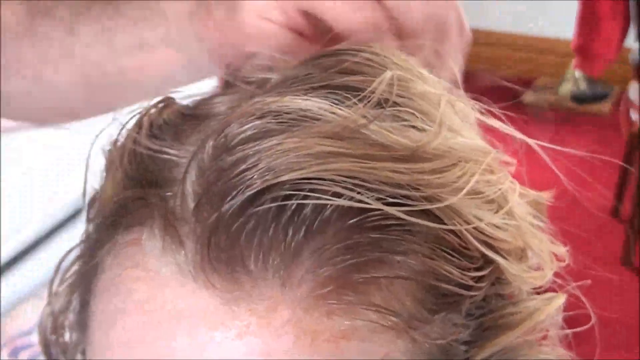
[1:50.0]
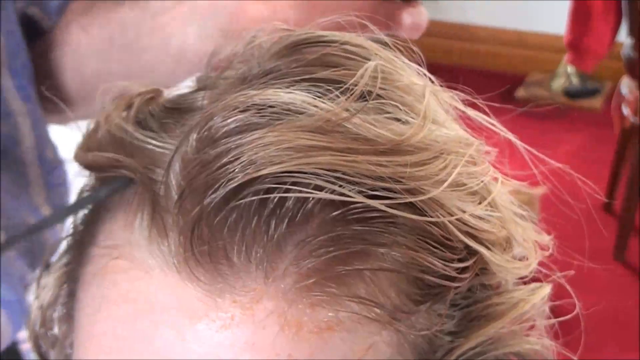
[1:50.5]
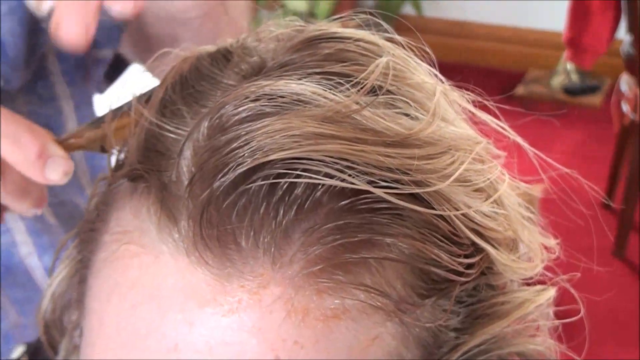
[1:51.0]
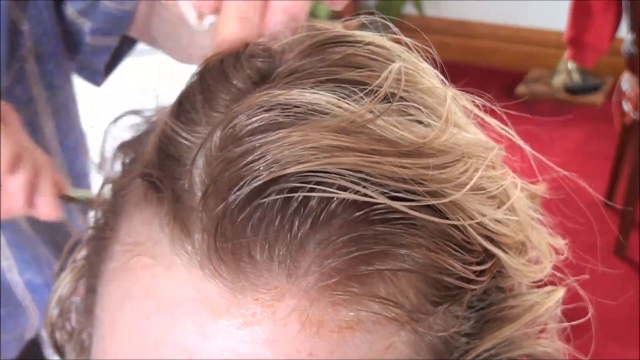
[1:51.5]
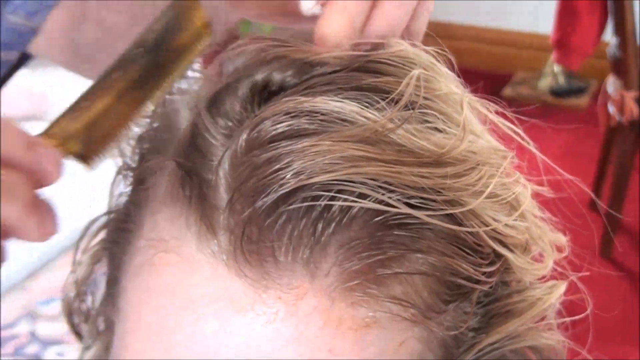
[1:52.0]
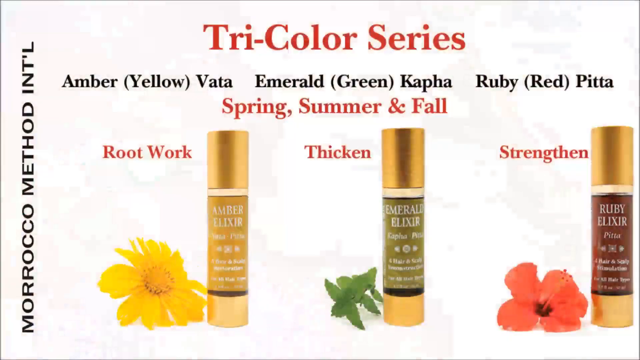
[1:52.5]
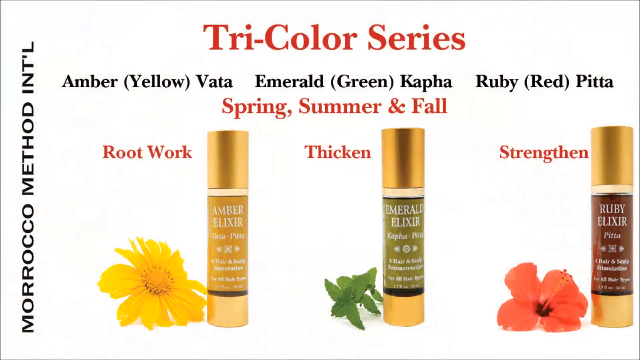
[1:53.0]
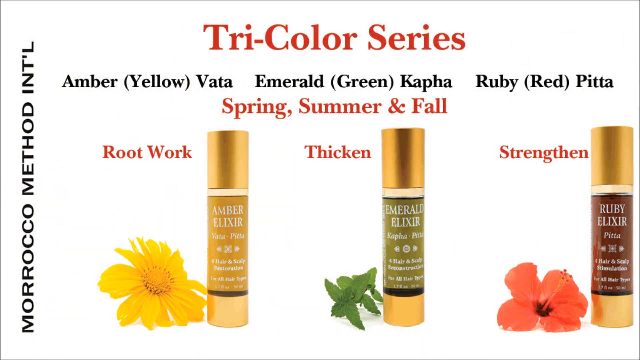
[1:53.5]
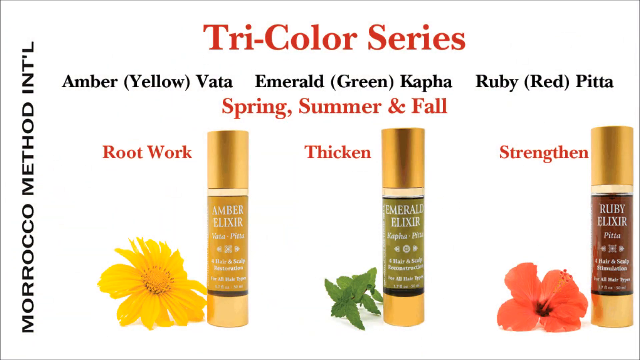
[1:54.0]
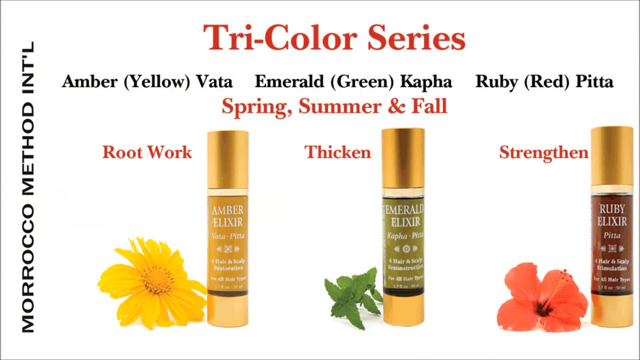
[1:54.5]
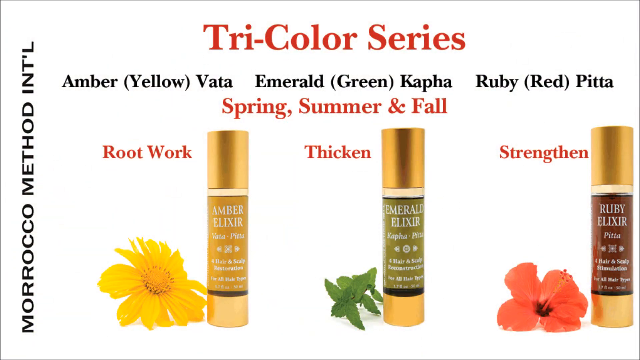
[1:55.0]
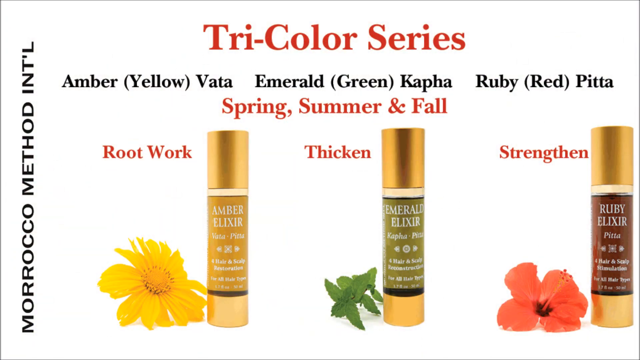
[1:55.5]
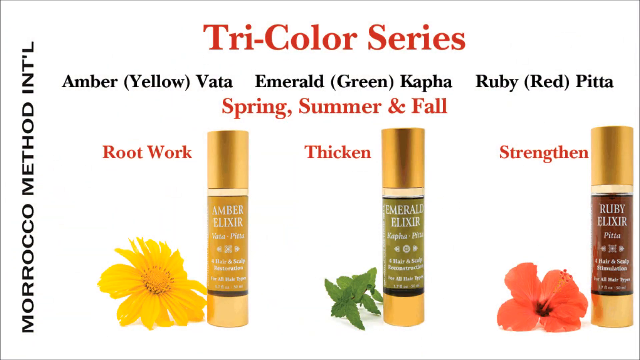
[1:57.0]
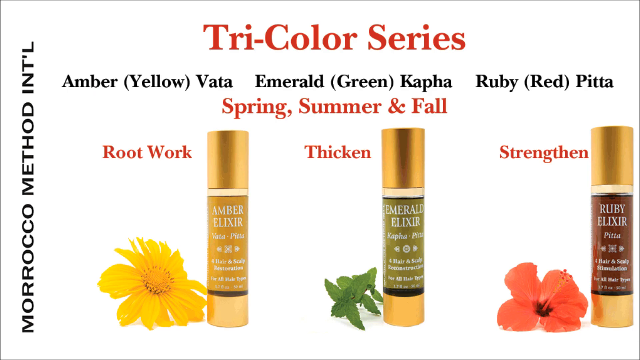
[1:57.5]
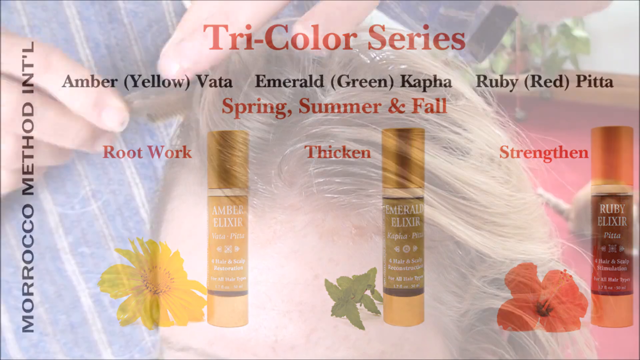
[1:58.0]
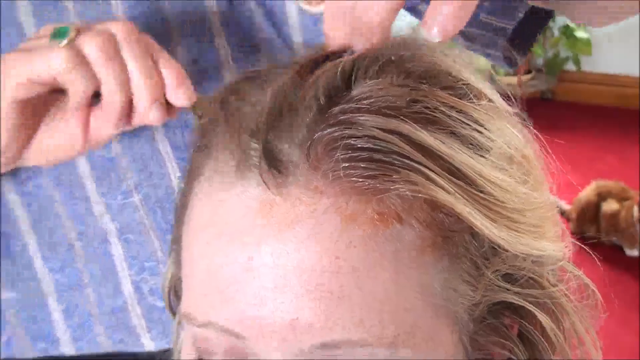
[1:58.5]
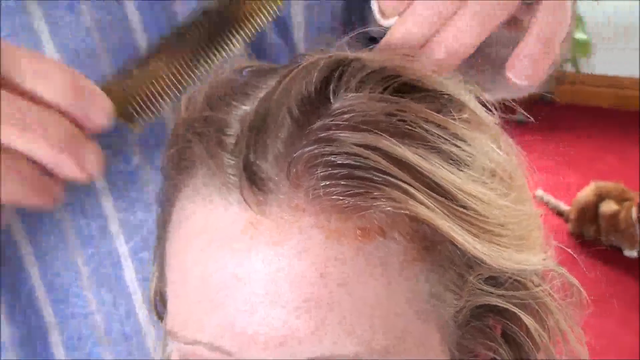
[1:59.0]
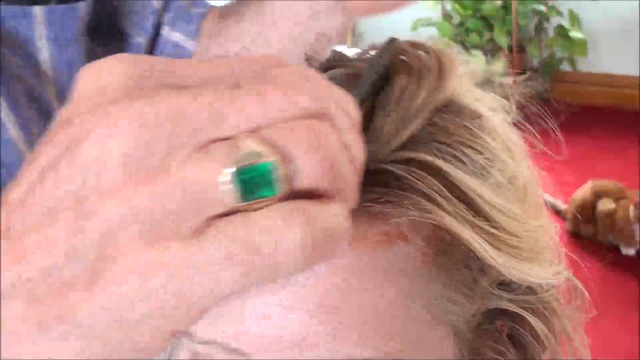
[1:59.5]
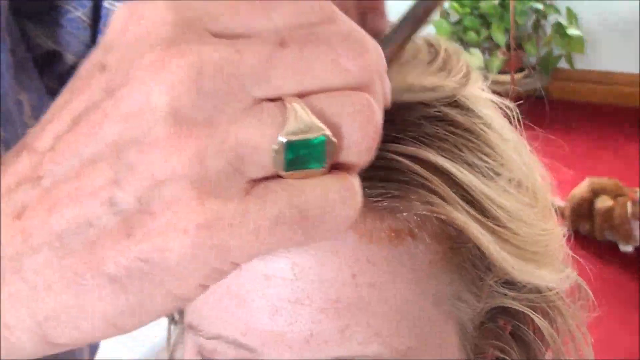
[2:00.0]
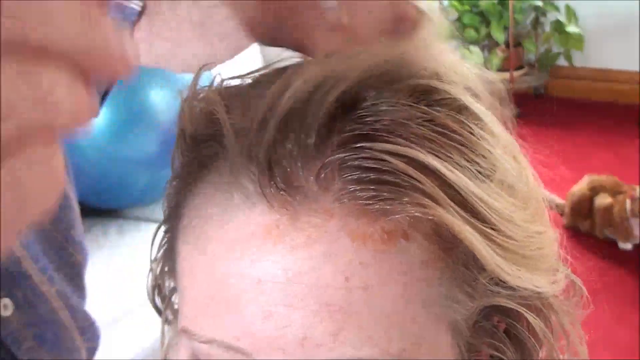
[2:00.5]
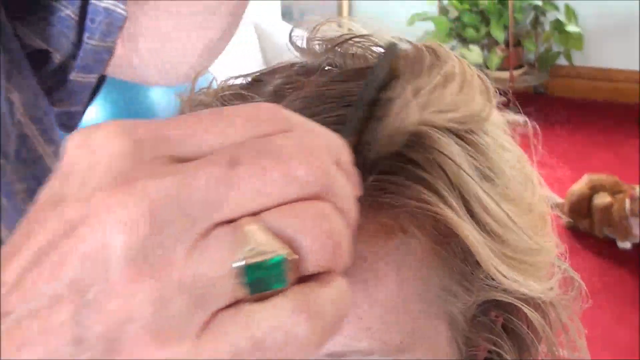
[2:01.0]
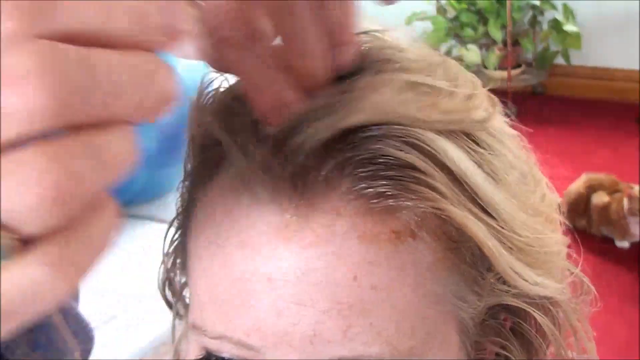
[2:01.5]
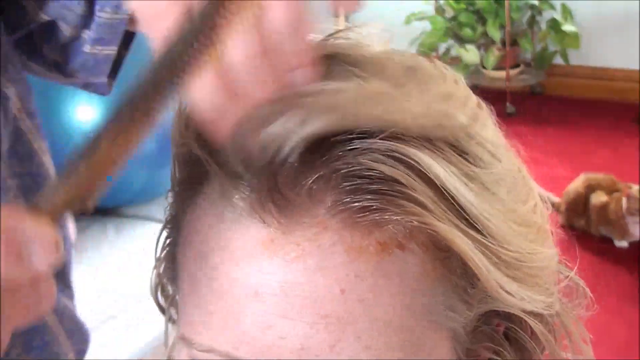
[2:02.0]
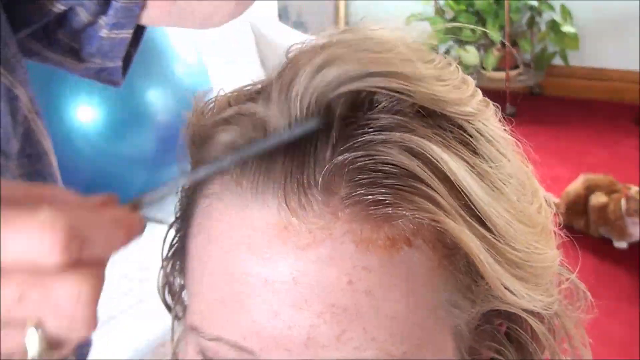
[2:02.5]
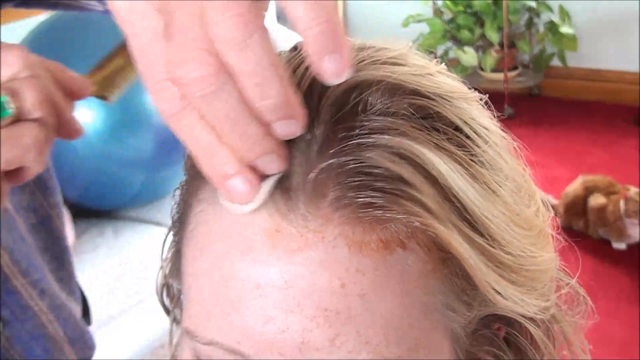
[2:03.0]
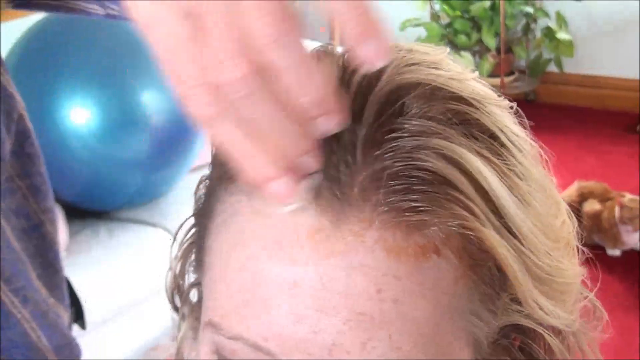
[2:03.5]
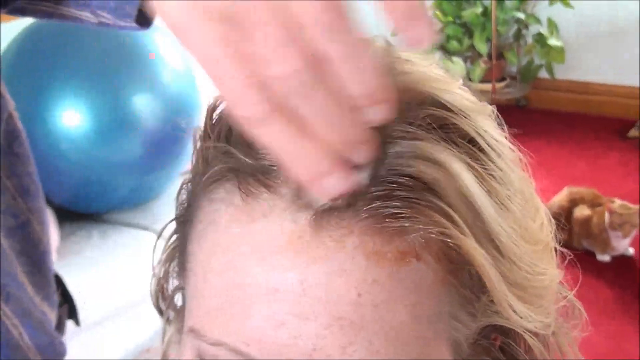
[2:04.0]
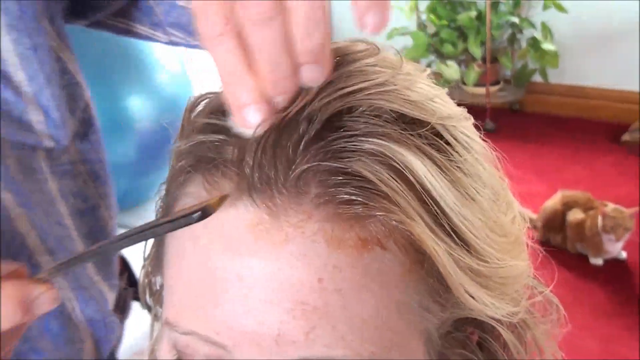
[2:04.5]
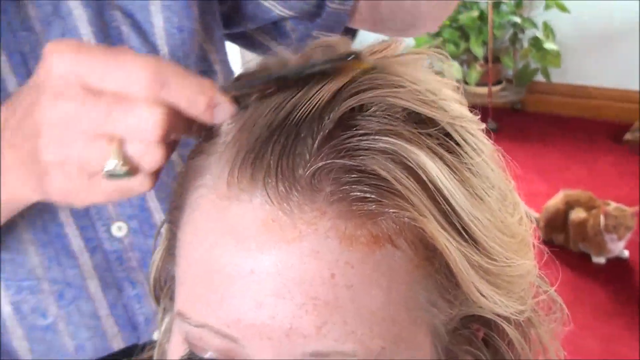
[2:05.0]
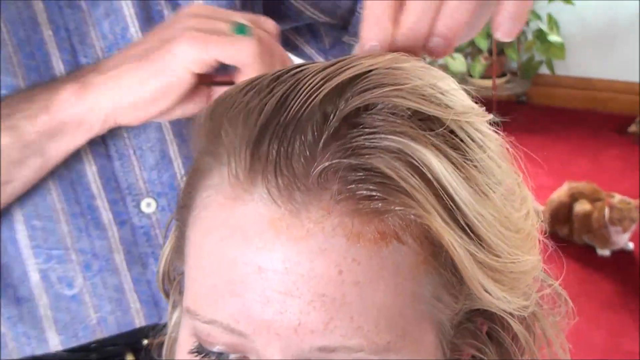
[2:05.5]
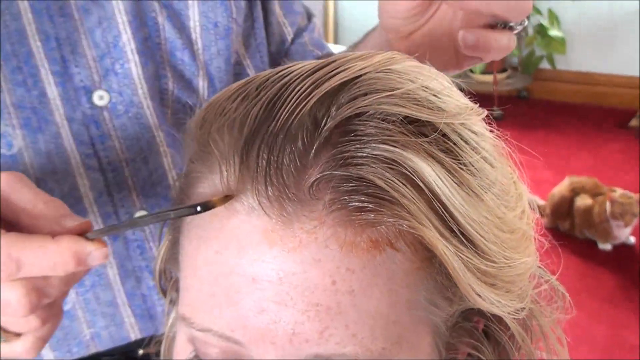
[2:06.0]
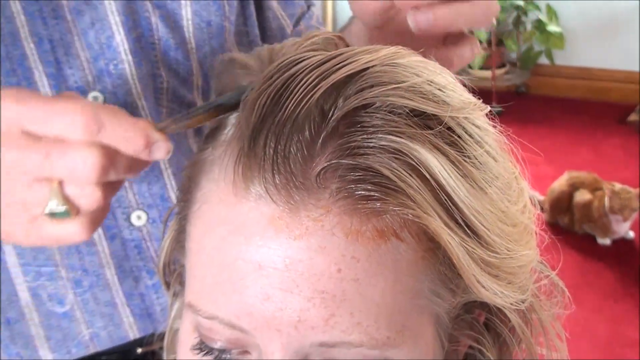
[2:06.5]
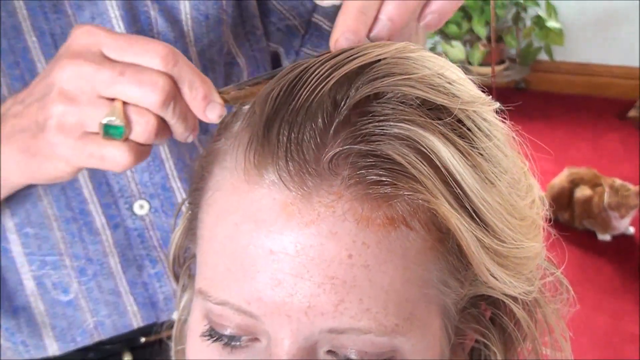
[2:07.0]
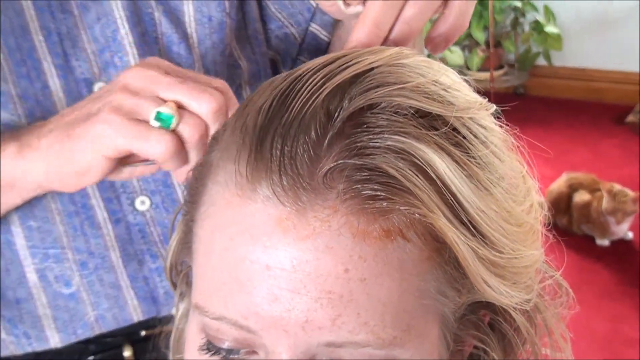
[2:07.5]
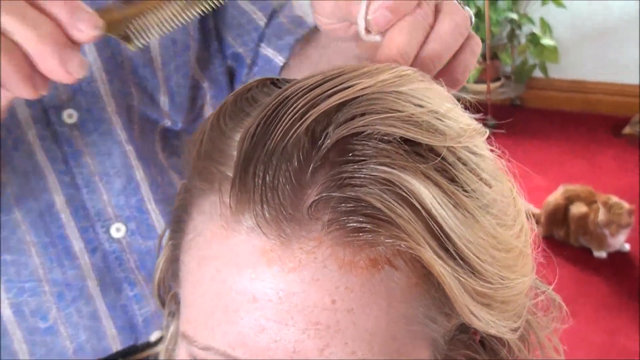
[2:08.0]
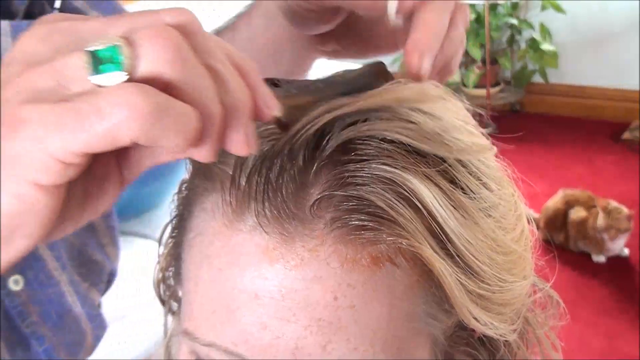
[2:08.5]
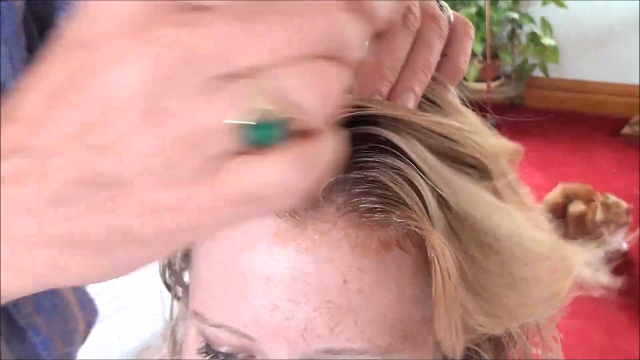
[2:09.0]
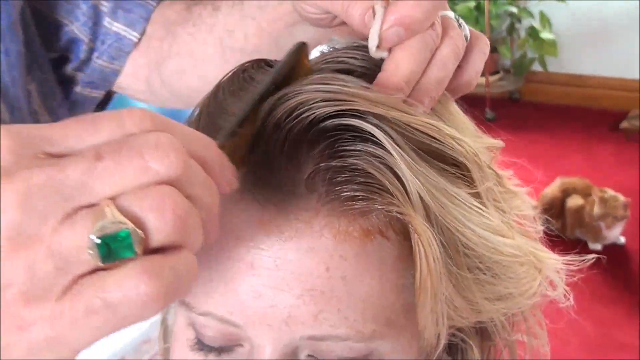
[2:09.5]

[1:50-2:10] The top of someone's head is shown with a hand in the hair and a red carpet in the background, and a comb combs the hair. An information screen follows reading "tricolor series," "Amber yellow Vata," "emerald green kapha," "ruby red pitta" and "spring summer and fall." The first bottle is gold, says "root work," has "amber elixir" on the label and a sunflower next to it. The second bottle says "thicken" and "emerald elixir," with an herb, perhaps mint or basil, lying next to it. The third is a gold bottle that says "strengthen," with a red flower next to it. The video returns to the top of someone's head, where the comb parts the hair and something is rubbed into the parted area. An orange tabby cat is on the floor in the background.